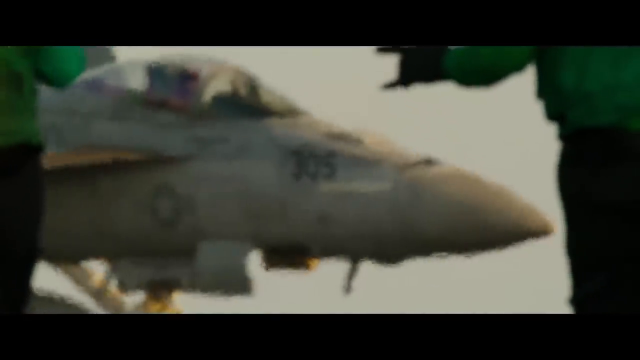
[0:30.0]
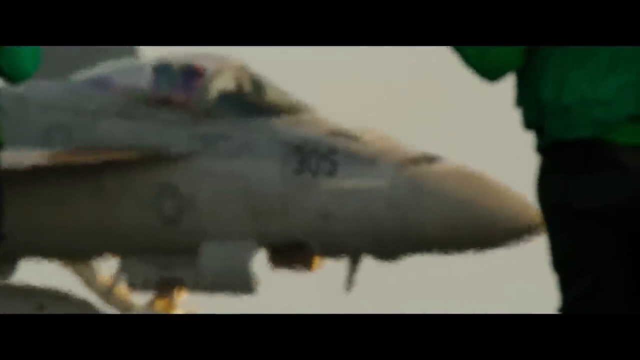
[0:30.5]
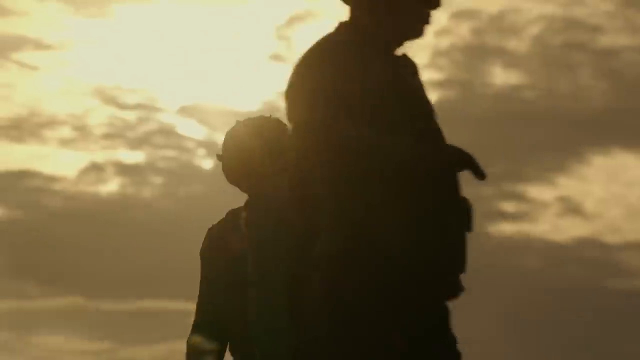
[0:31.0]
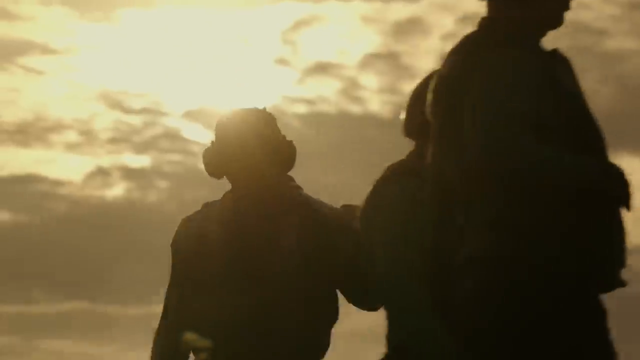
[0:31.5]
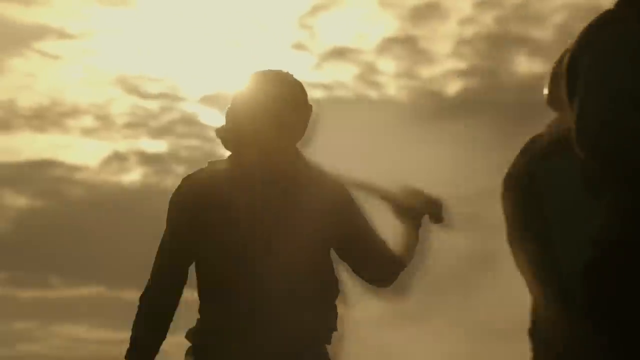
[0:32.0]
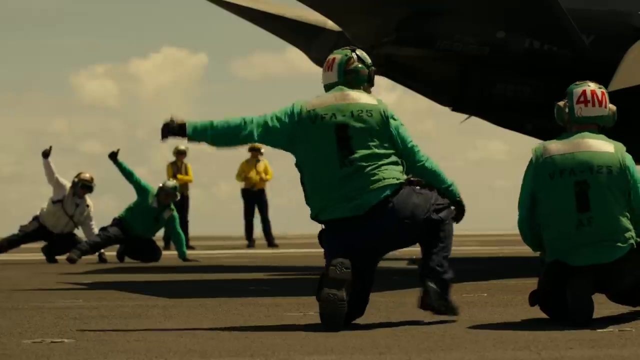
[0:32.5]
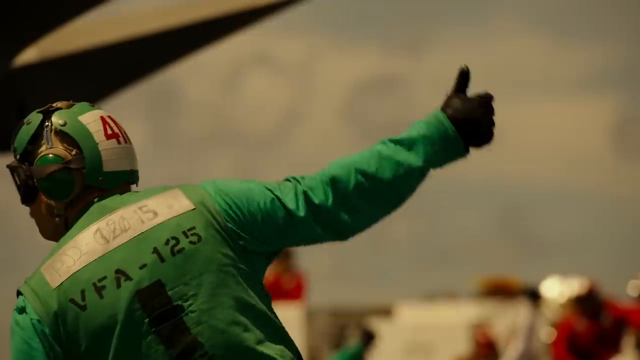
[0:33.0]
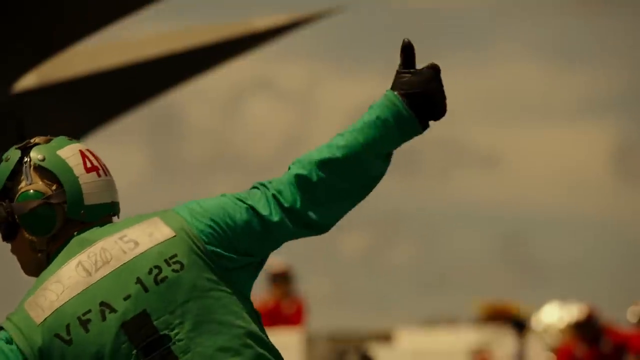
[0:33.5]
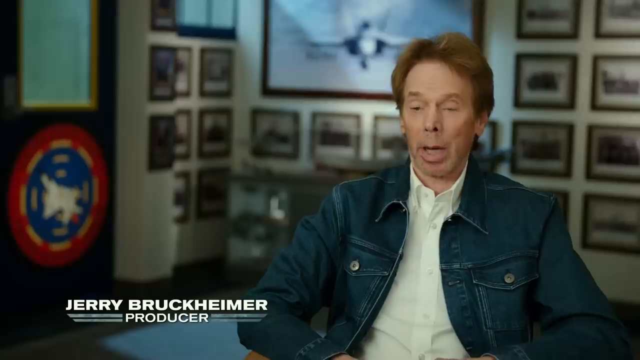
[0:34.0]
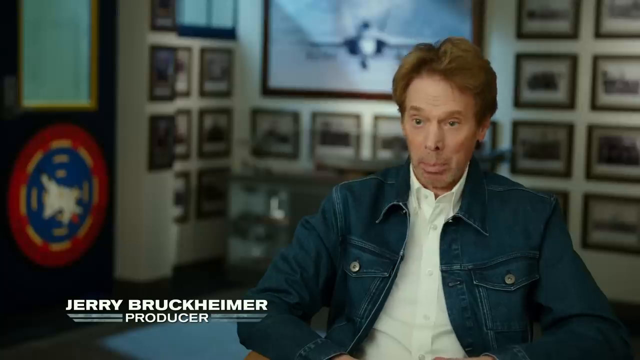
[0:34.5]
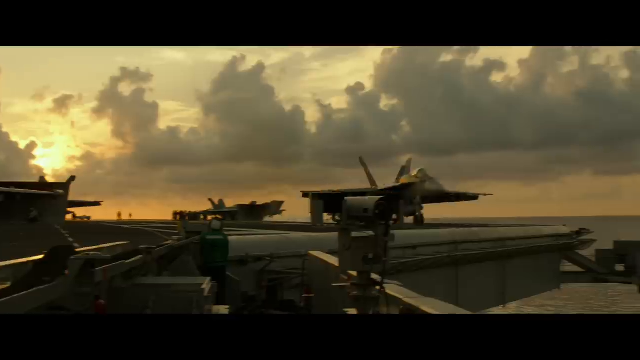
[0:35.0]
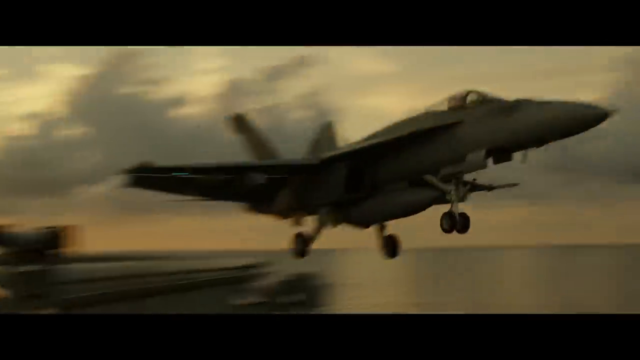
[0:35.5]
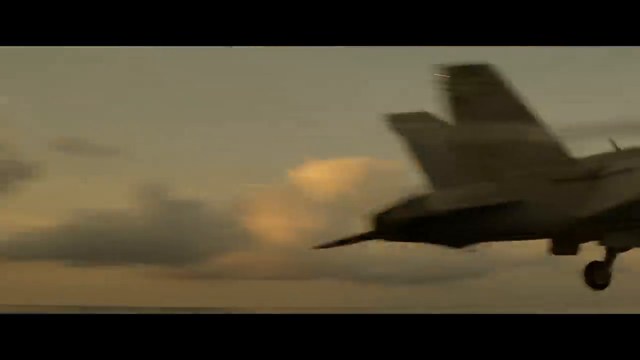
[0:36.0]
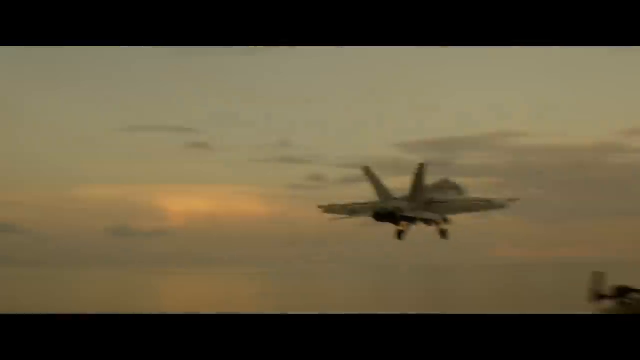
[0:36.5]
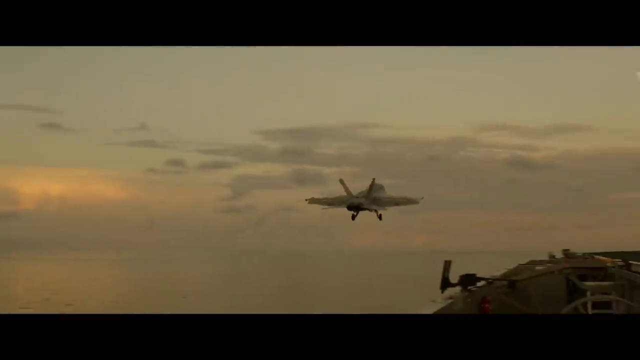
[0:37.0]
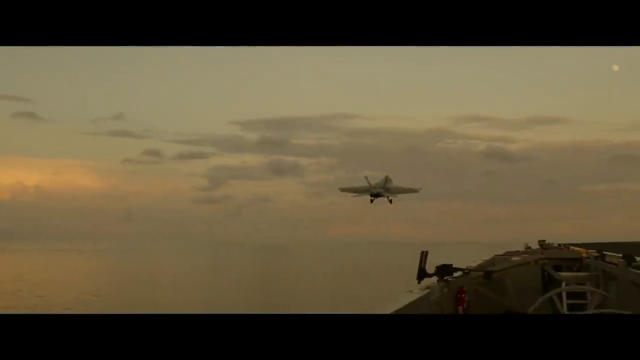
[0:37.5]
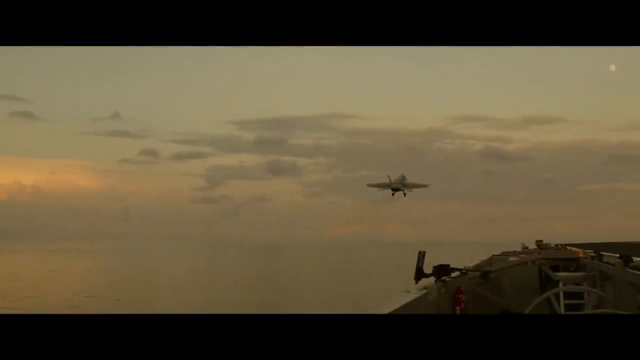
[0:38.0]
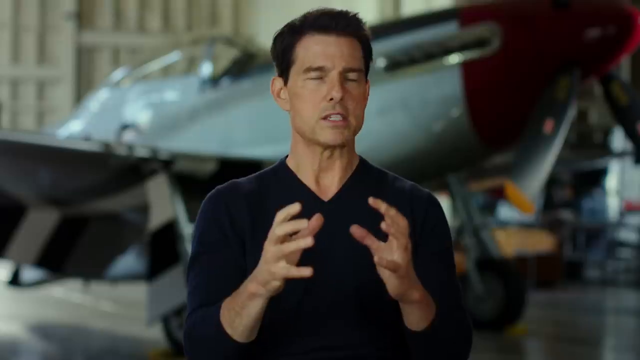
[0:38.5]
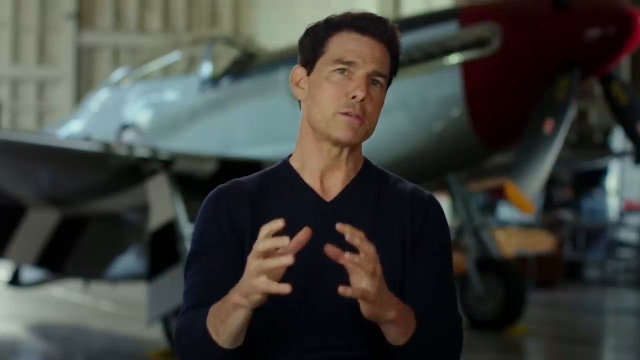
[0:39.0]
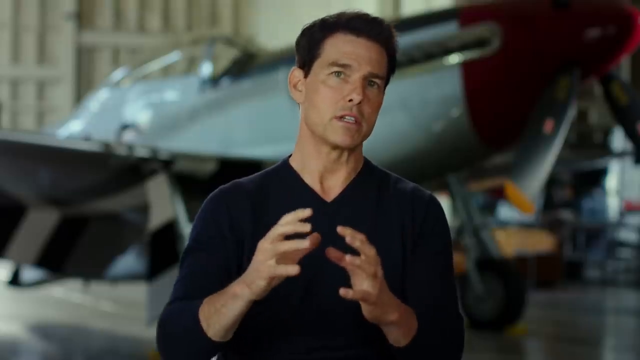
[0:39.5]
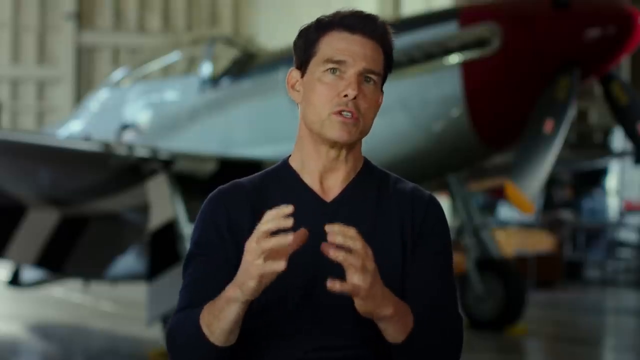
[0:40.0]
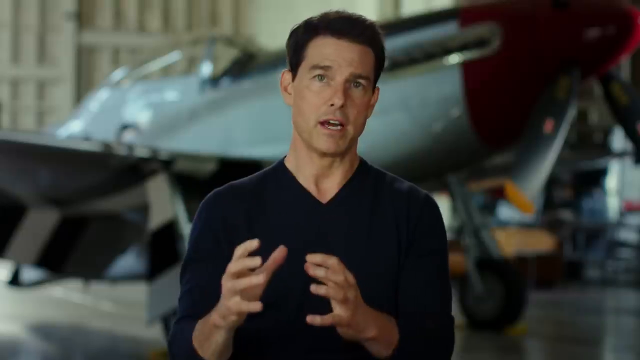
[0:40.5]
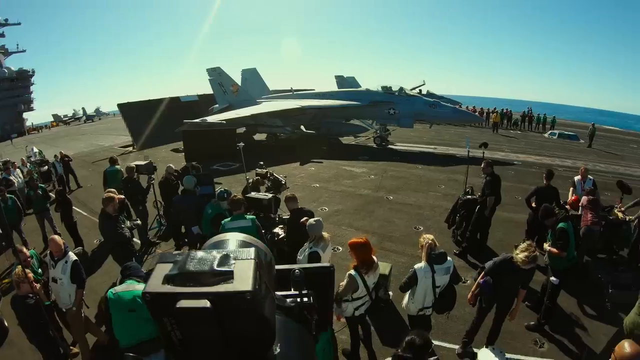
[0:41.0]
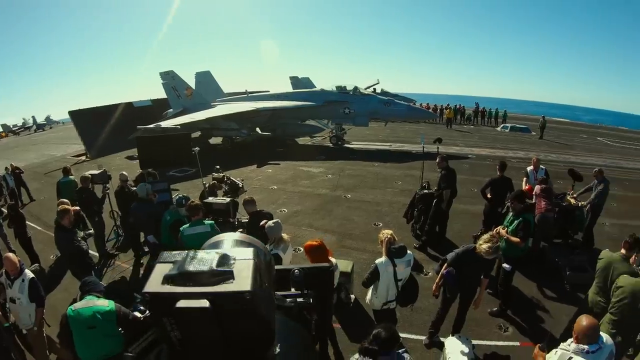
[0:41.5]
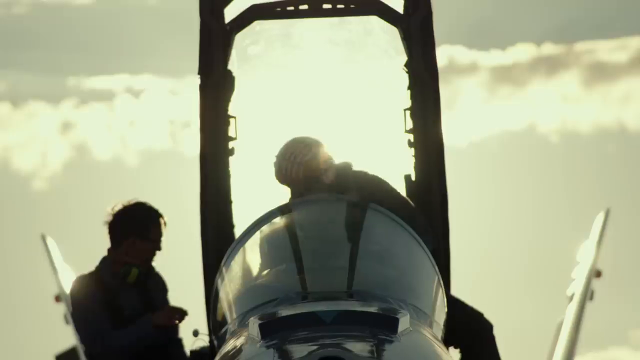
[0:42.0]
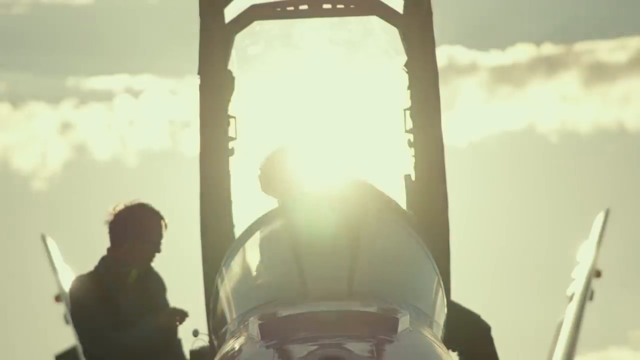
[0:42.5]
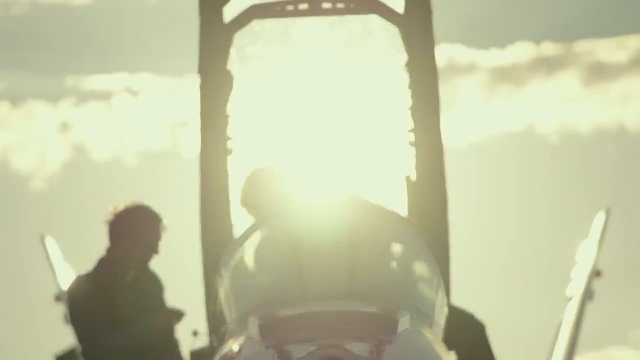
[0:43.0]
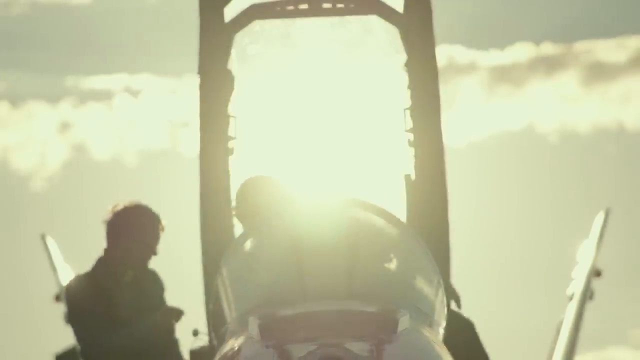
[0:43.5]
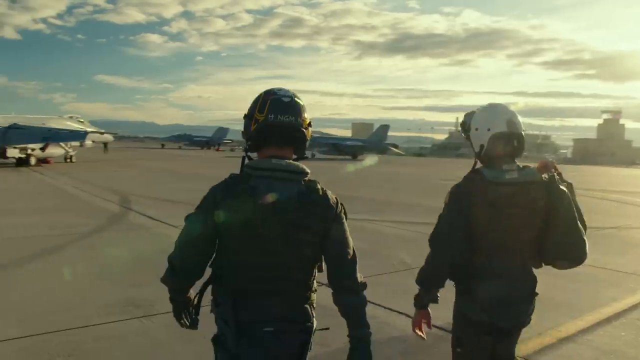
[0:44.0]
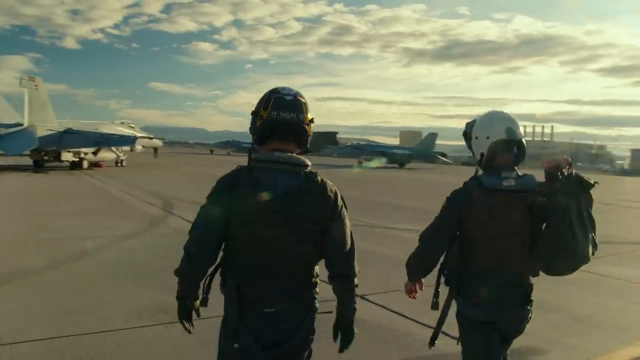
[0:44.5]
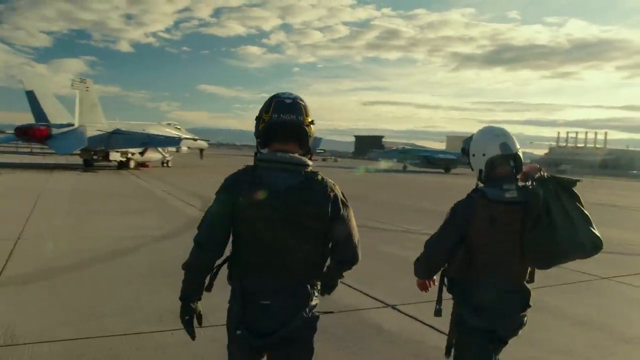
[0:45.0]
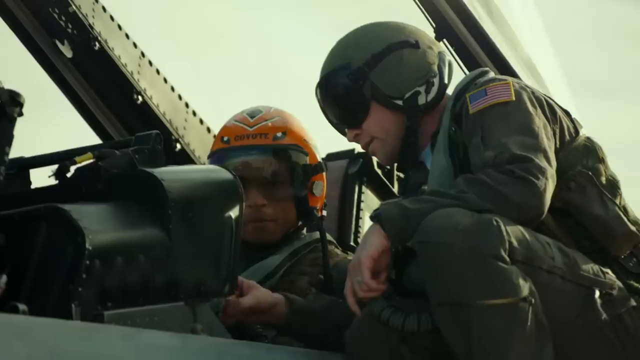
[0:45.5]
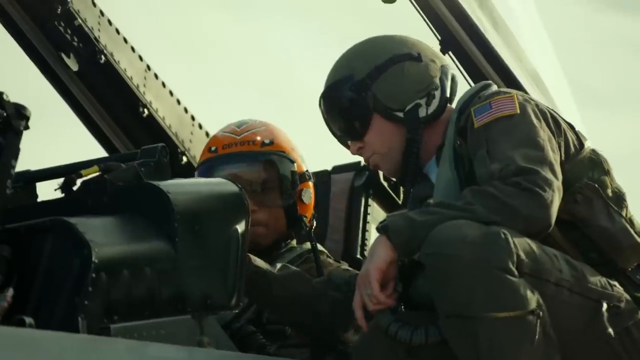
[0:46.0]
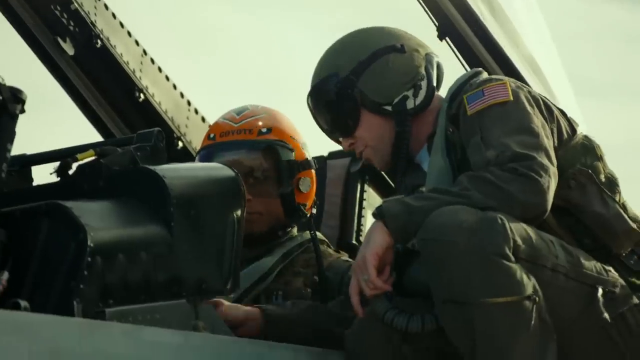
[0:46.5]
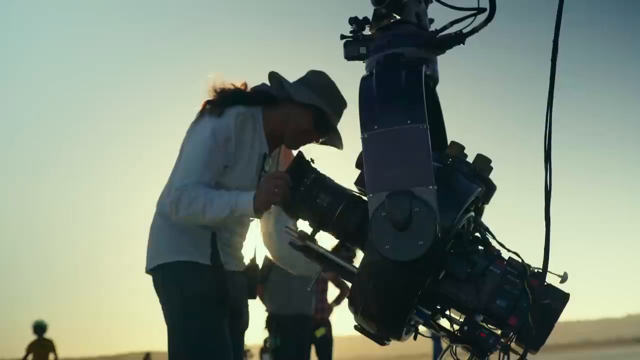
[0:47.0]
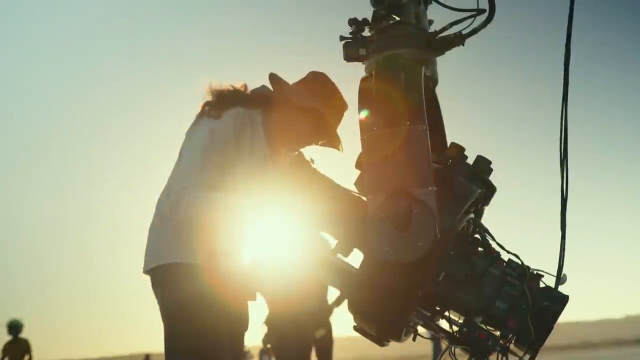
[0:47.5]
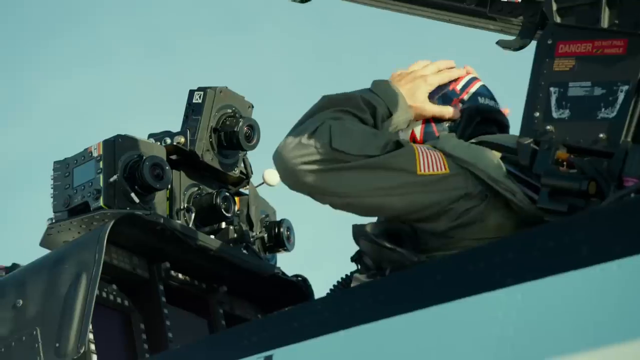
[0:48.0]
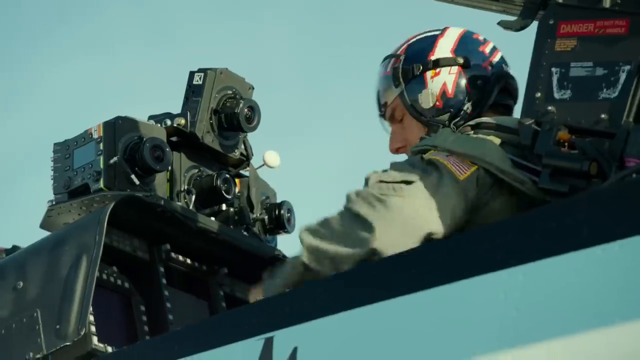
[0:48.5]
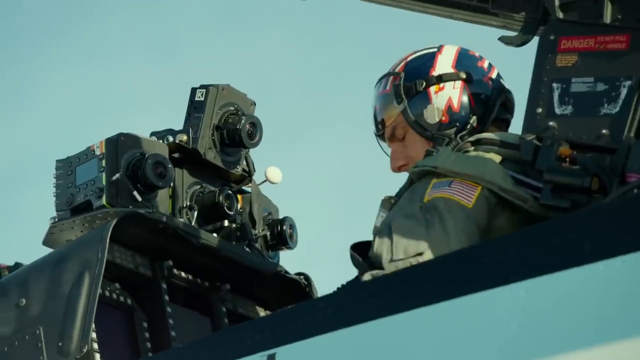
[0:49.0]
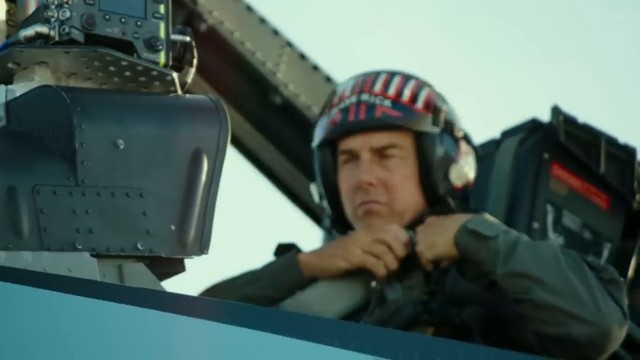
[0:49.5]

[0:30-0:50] The text "June 2020" and "Maverick" appears, presenting something like a movie. People watch a man as he competes against others. At first only men are seen, but later a woman is also in the competition; she looks like she is suffocating up in the air. The people look happy at first and then start to look sad. Joseph and Jerry appear, apparently directors, seemingly explaining what is going on. The people appear to be in America, with the American flag on their clothes. Some look like soldiers wearing green clothes. The text "payback" also appears. People wearing yellow direct the others which way to go.